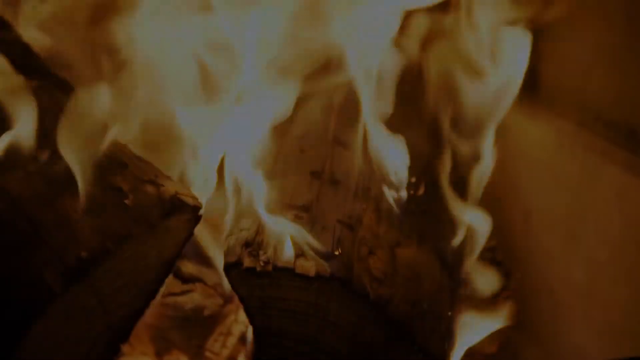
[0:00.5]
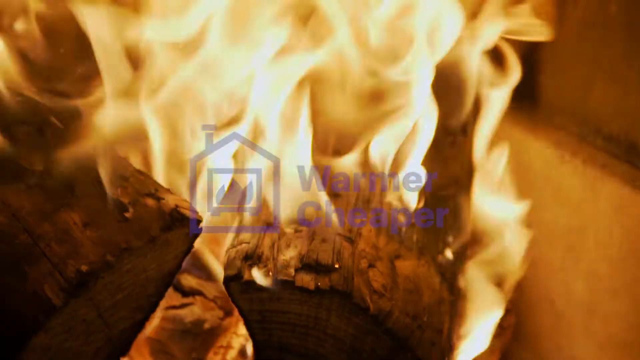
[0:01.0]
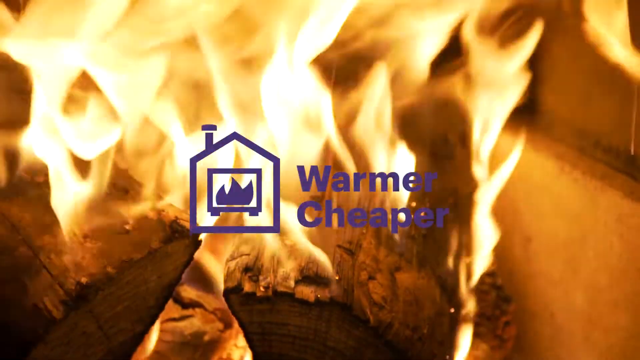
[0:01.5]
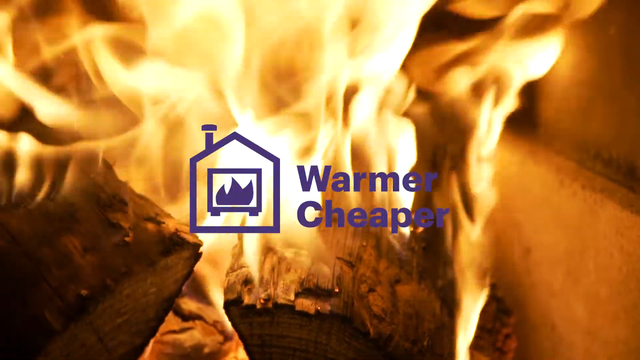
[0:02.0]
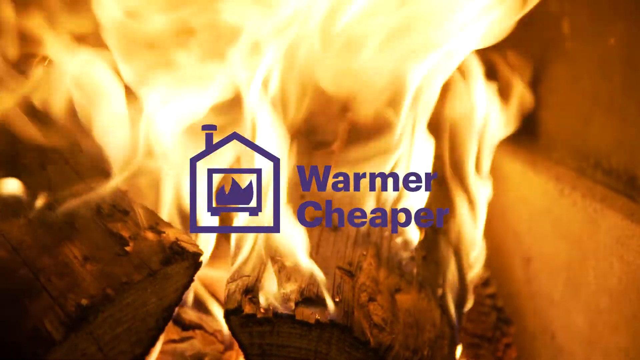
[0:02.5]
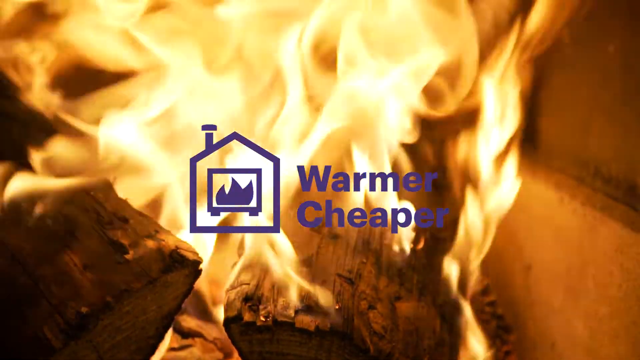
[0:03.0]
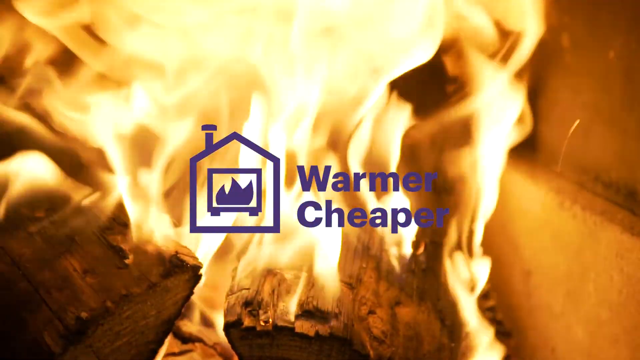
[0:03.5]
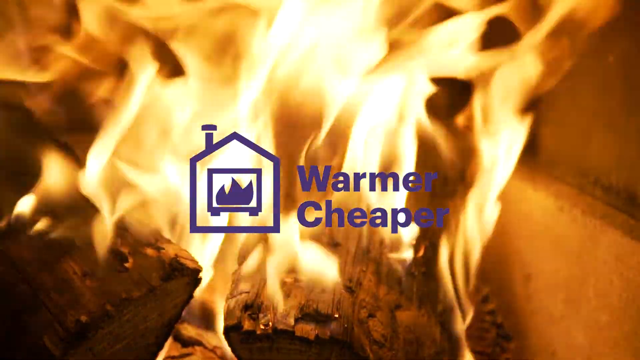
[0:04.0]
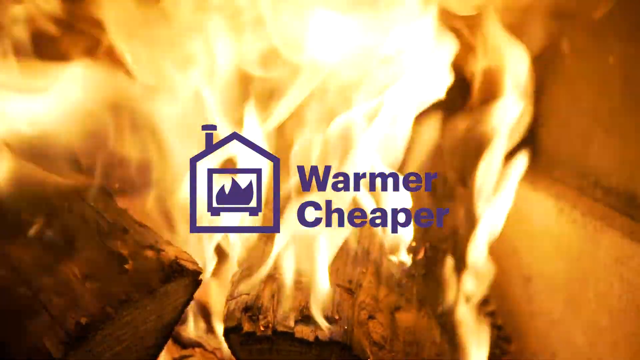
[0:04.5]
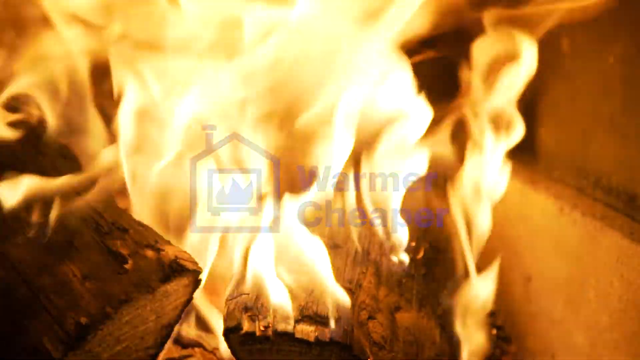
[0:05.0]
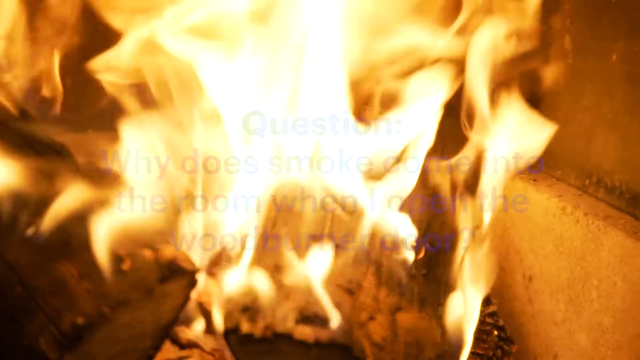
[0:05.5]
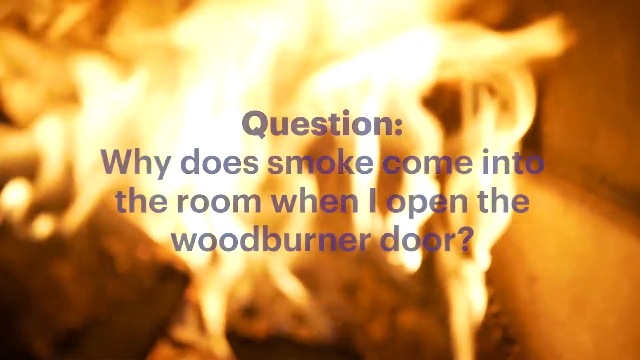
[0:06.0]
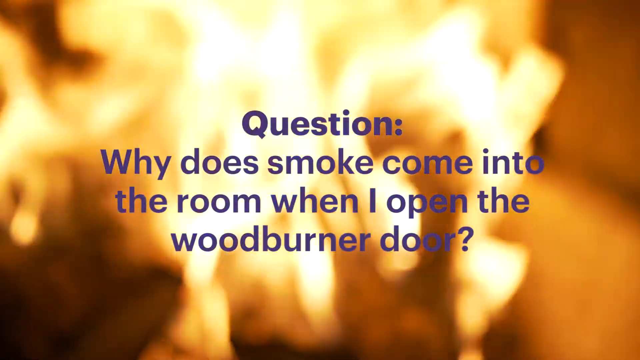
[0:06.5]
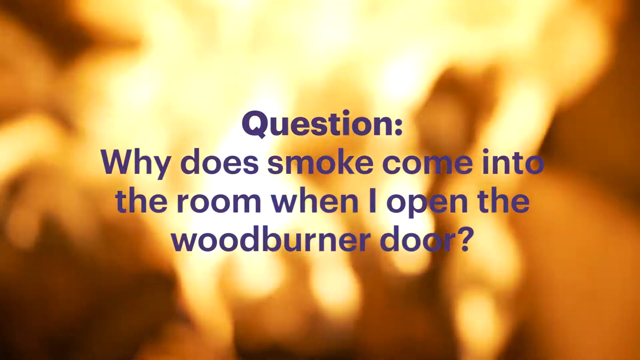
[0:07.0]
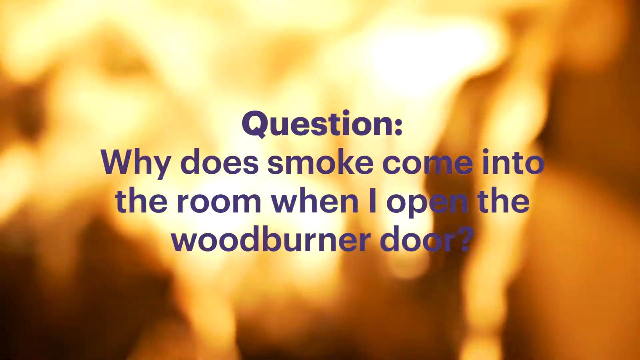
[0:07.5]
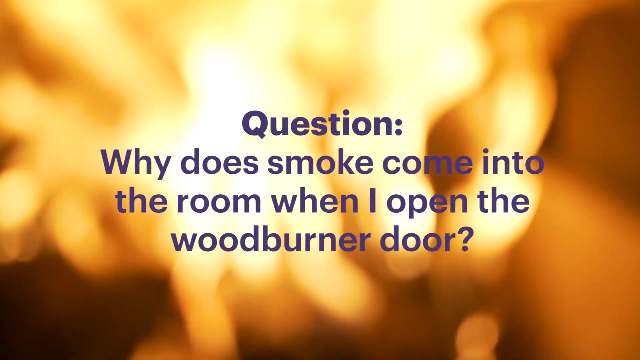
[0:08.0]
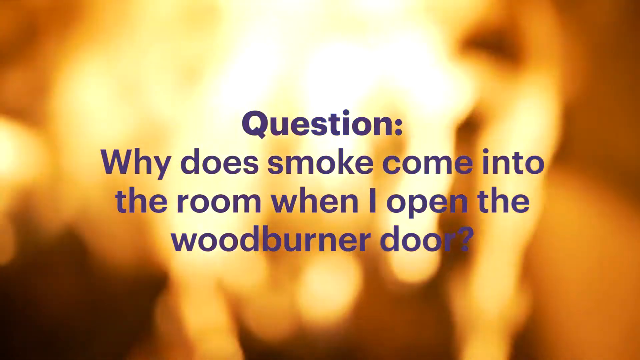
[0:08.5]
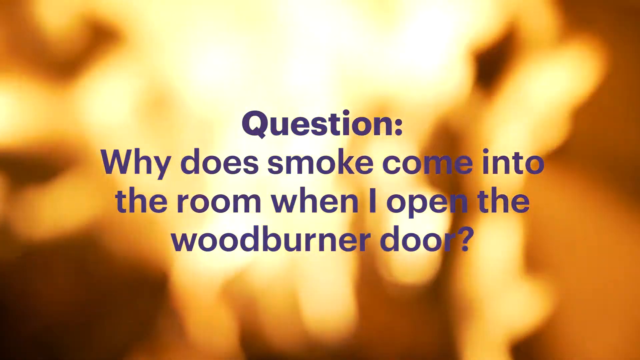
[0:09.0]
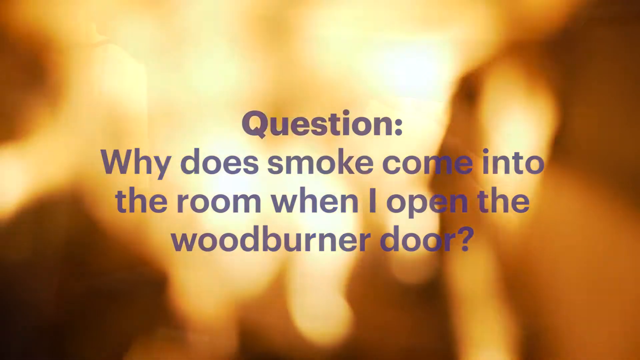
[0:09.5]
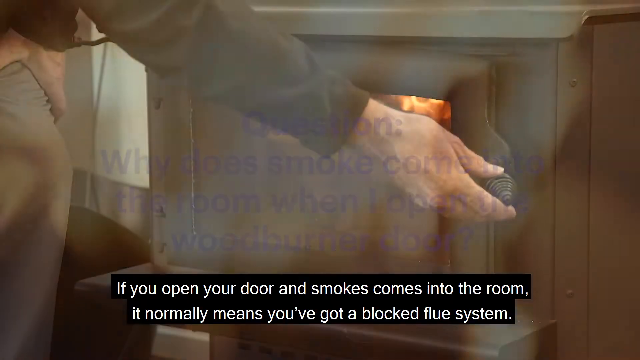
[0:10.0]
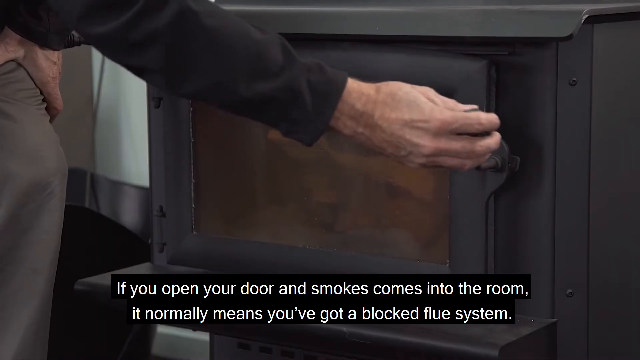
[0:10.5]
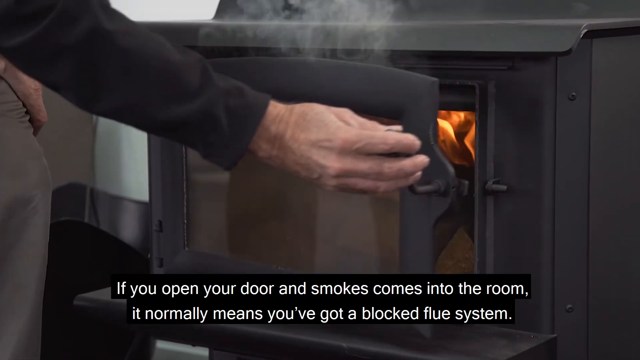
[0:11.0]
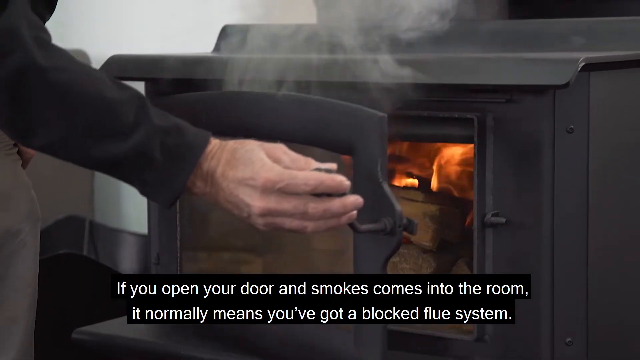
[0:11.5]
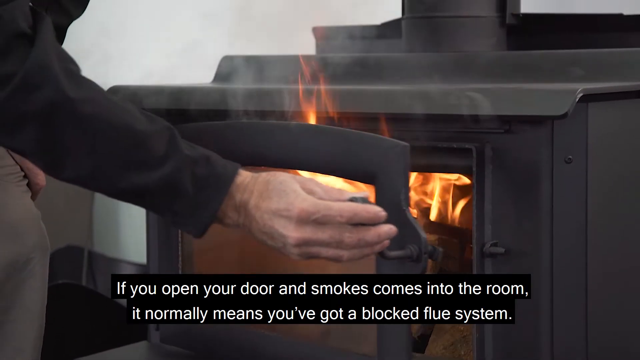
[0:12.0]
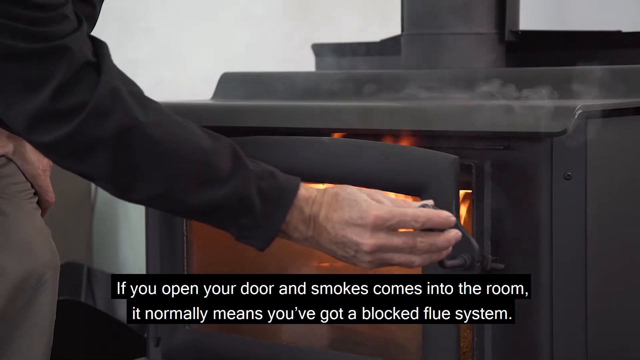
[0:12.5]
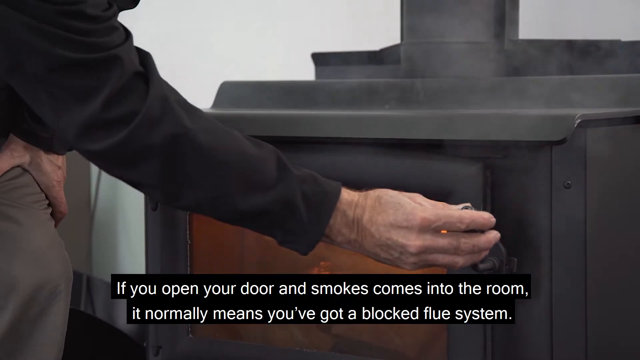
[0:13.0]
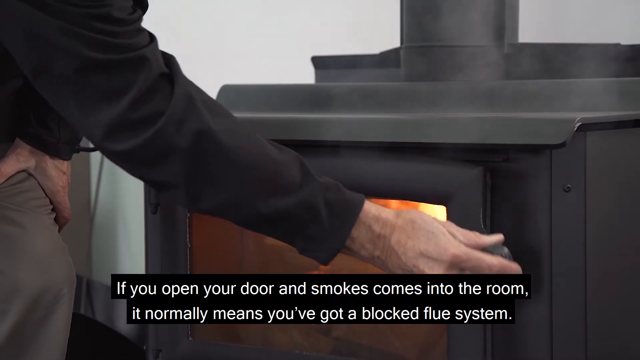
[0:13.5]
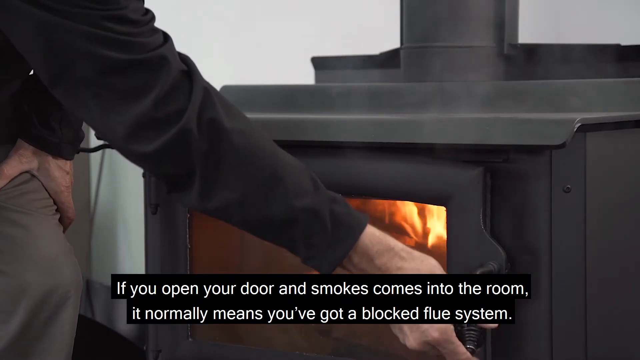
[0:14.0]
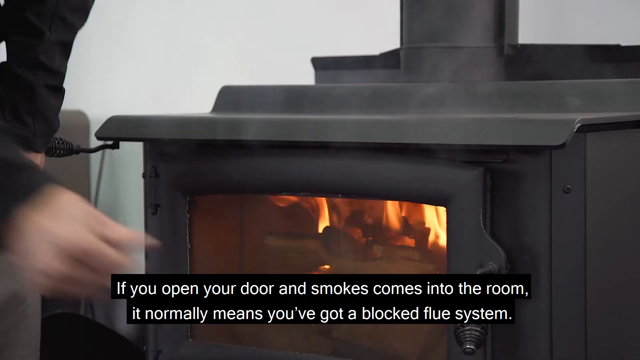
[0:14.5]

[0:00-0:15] The video opens on a close-up of what looks like a fireplace or some sort of fire. It is hard to tell what is burning, but it is probably wood, since there appears to be the end of a log at the bottom left. The orange and light yellow flames move in various motions. In the very middle of the screen is a logo that says "Warmer Cheaper", and to its left is the actual logo: what looks like a fire in the middle, a square right outside it, a house outline around the square and fire, and a chimney at the top left of the house. The fire is shown for a long time, then it becomes the background and blurs. Purple text pops up: "Question. Why does smoke come into the room when I open the wood burner door?" Next, a light-skinned man in a long-sleeved black shirt opens a black fireplace that looks like a more contained type, one that has to be opened and has a hood. He opens it and then closes it, and some smoke comes out and disperses as he closes it. Even once it is closed, some smoke appears to still be coming out of it.